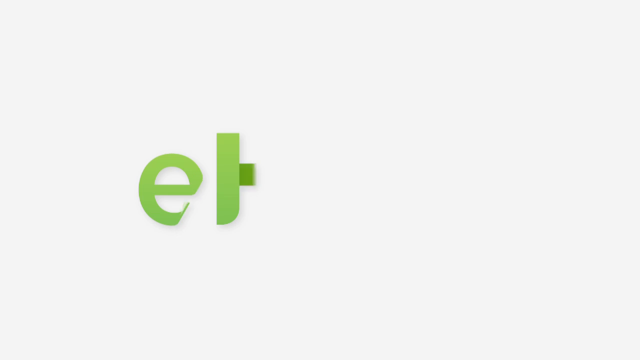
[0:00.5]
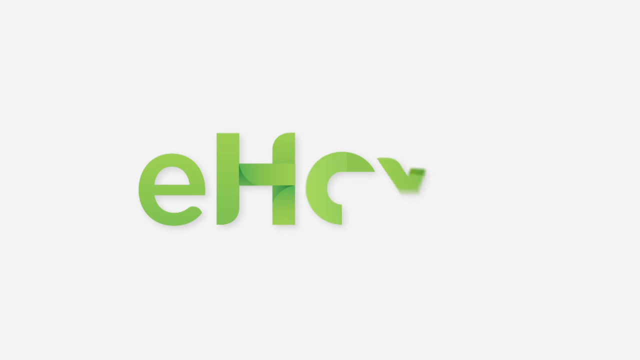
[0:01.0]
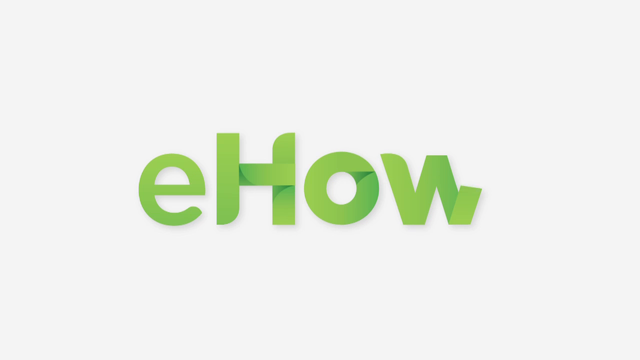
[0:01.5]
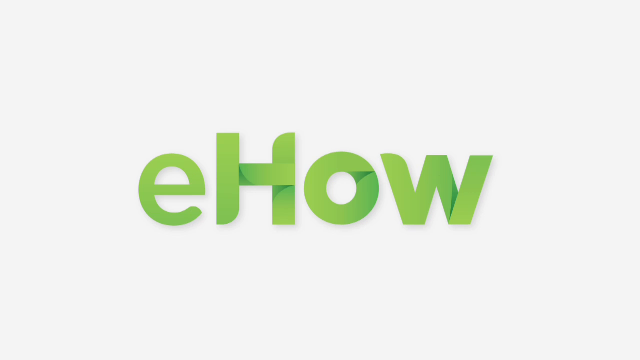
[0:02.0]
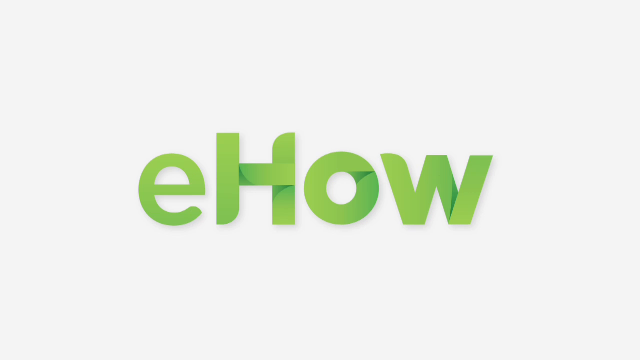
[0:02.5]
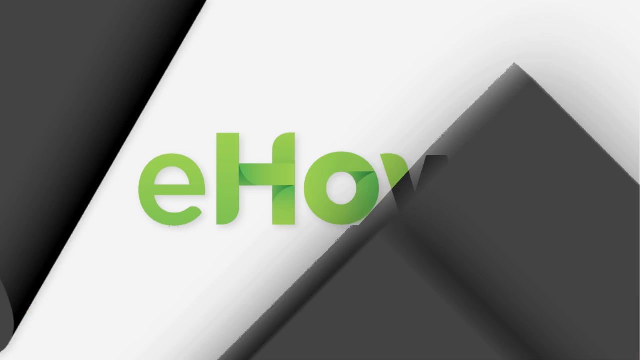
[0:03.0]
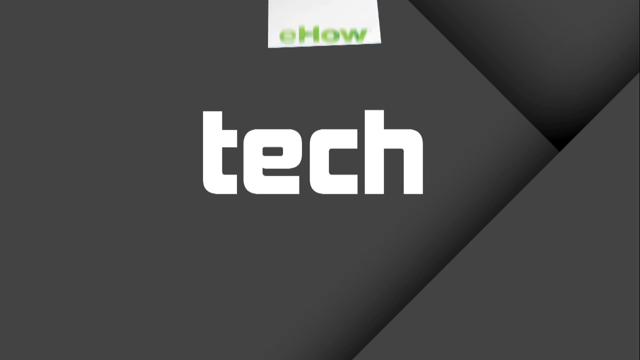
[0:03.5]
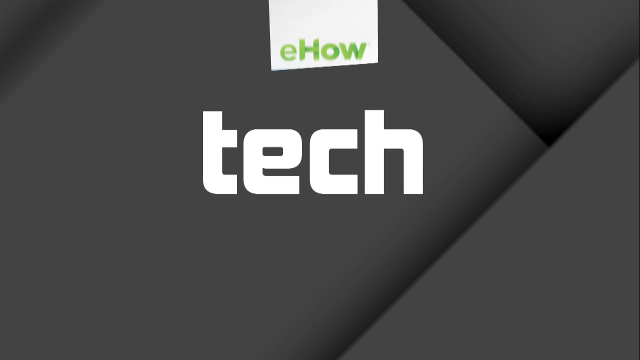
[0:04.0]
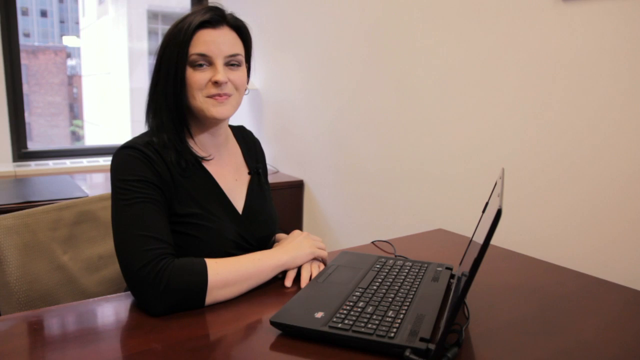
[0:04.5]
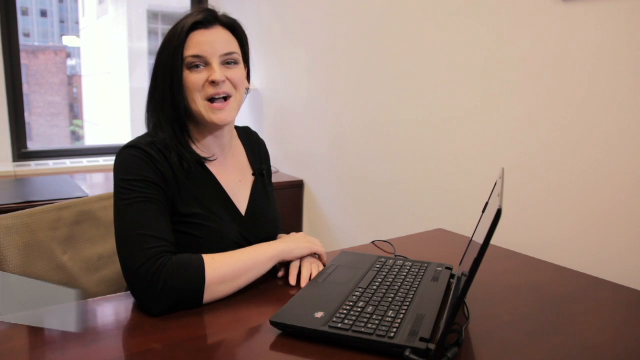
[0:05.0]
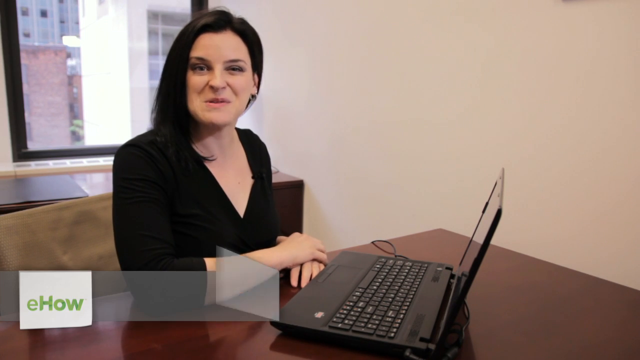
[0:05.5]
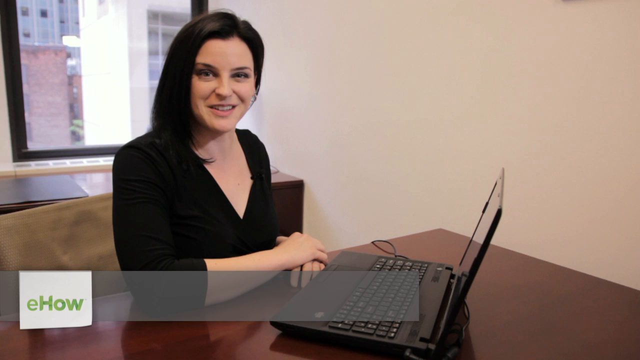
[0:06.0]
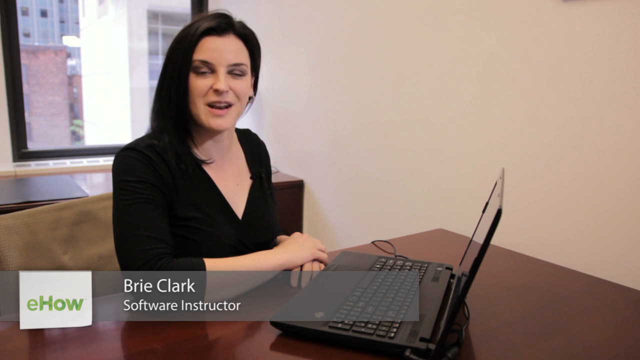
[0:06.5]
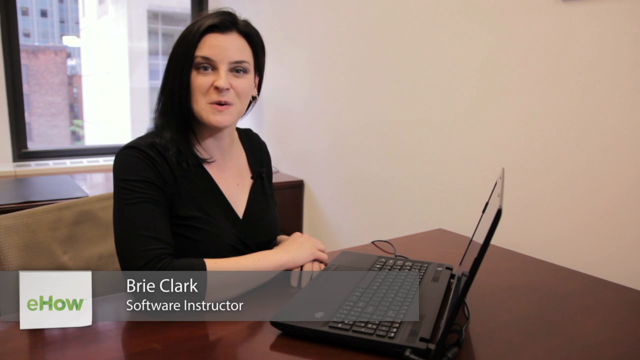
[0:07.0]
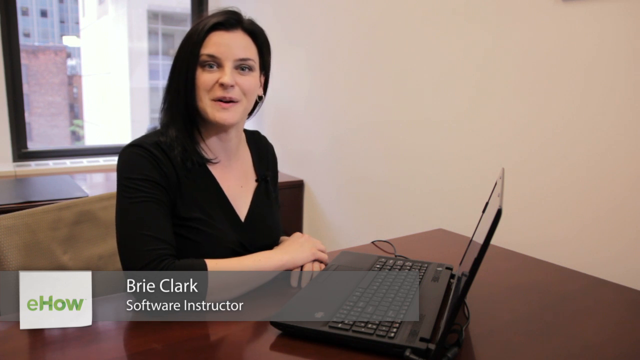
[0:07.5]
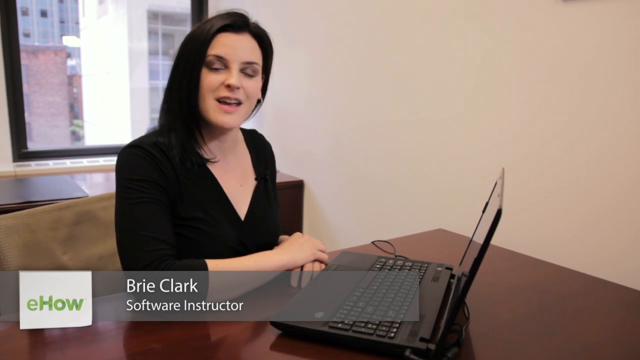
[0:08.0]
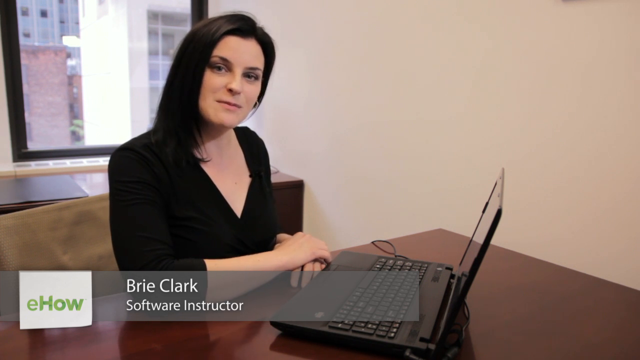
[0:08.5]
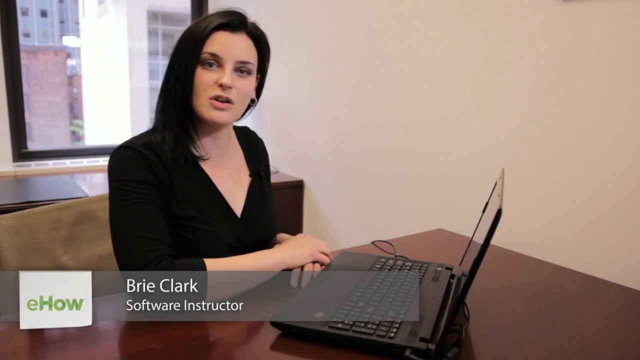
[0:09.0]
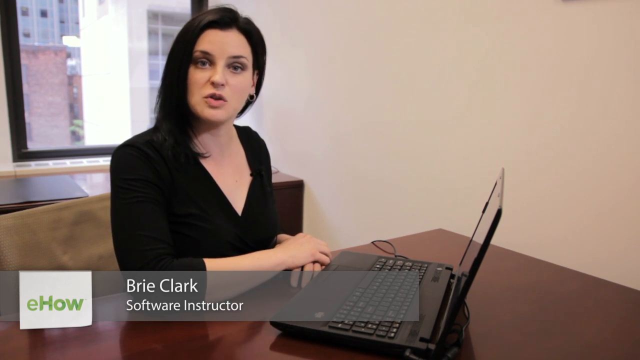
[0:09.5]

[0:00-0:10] A black screen transitions to a white screen showing "E-HOW" in all green letters. The background then changes to a set of gray panels, the word "TECH" appears, and "E-HOW" is a banner at the very top. A woman then starts talking, and on-screen text introduces her with "E-HOW", her name, "Brie Clark", and her position, "software instructor". She is sitting in what appears to be an office, in front of a laptop computer, with a window showing buildings behind her. She has dark hair and wears a black shirt, and she talks to the camera as she sits with her hands crossed over one another. The office is somewhat bare: there is a table with a kind of red maple finish, and furniture in the same finish is behind her, next to the window.